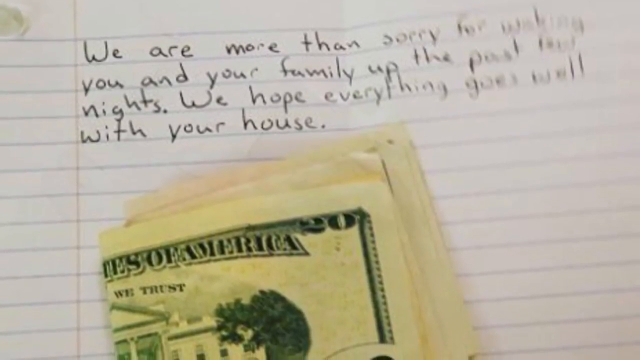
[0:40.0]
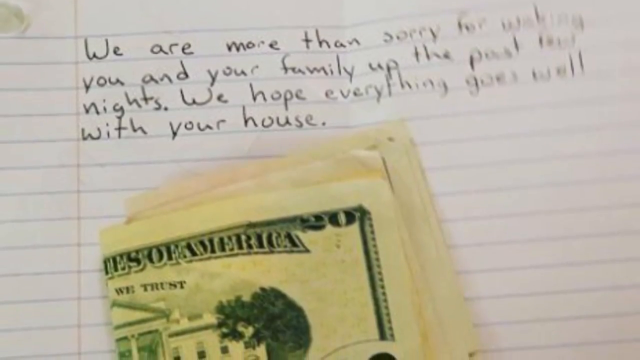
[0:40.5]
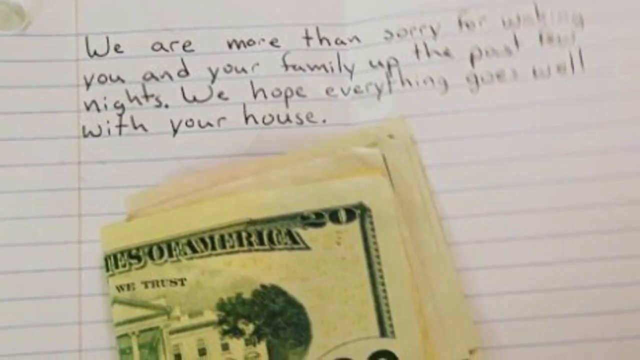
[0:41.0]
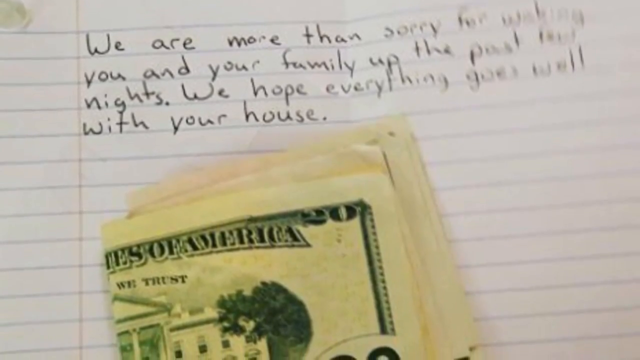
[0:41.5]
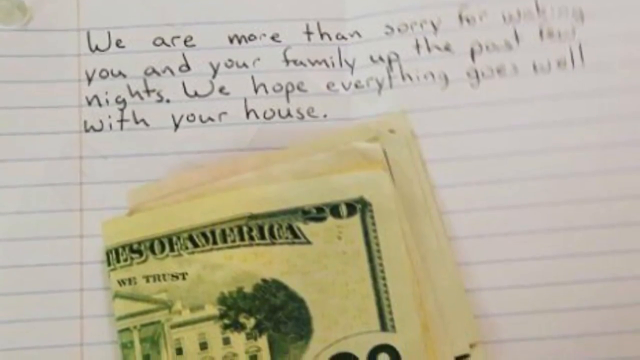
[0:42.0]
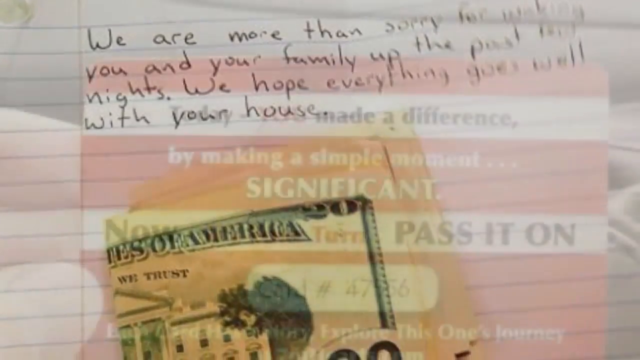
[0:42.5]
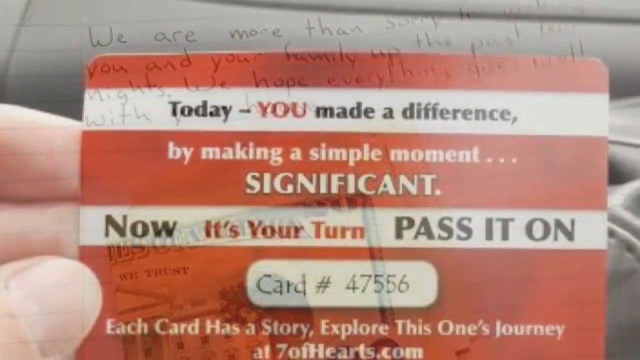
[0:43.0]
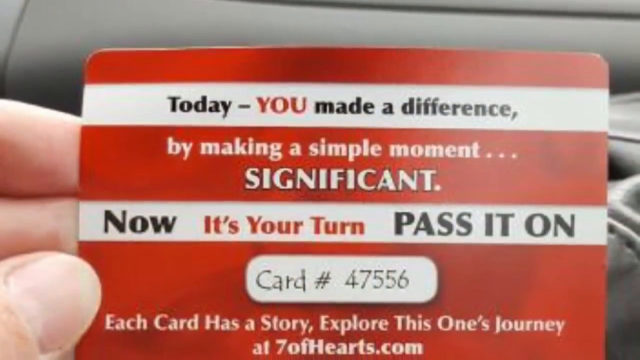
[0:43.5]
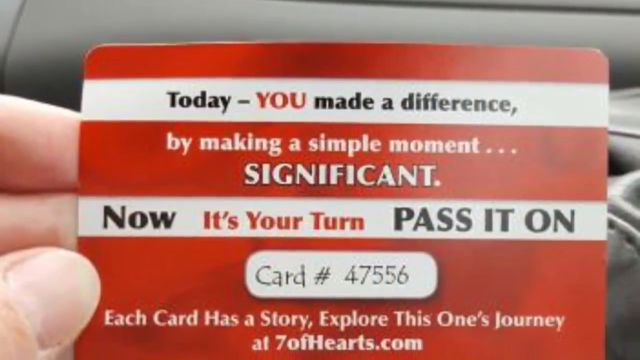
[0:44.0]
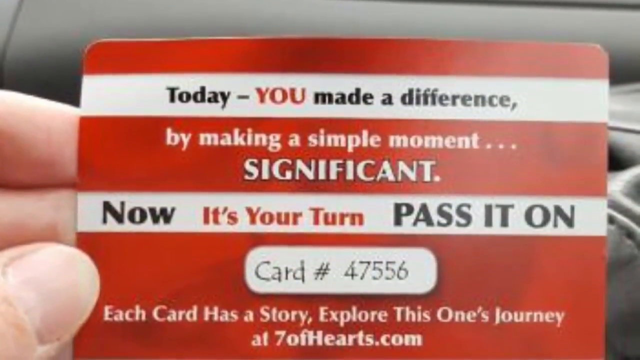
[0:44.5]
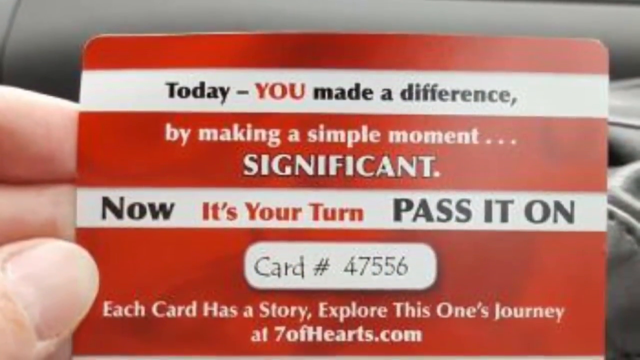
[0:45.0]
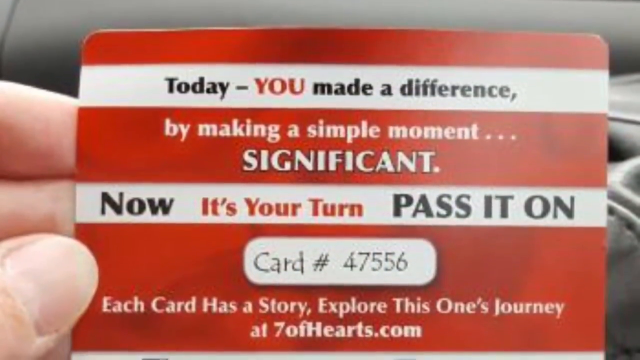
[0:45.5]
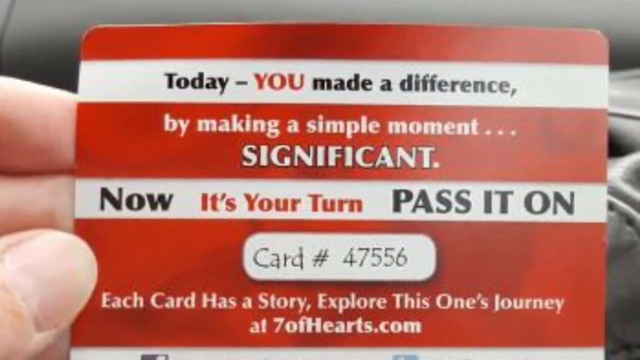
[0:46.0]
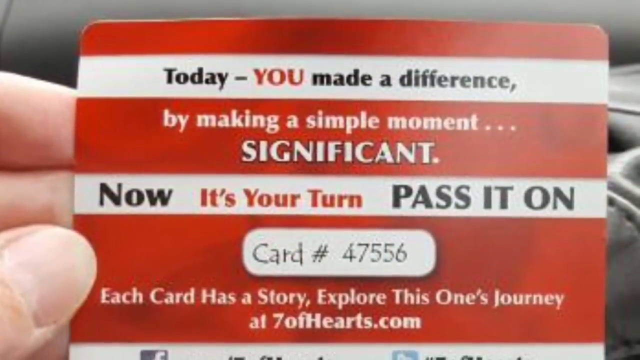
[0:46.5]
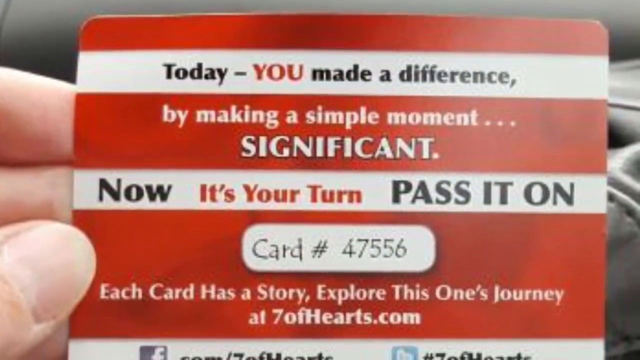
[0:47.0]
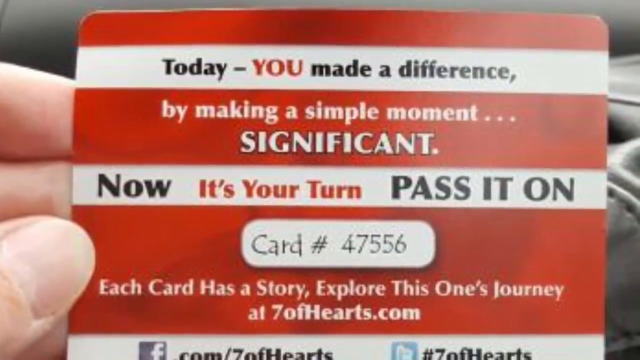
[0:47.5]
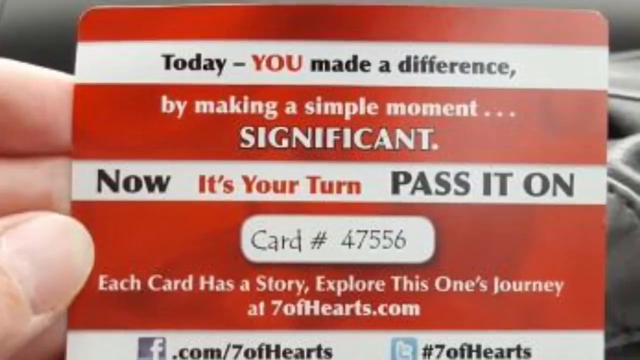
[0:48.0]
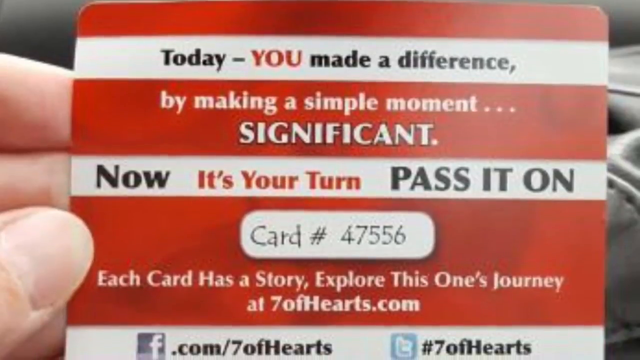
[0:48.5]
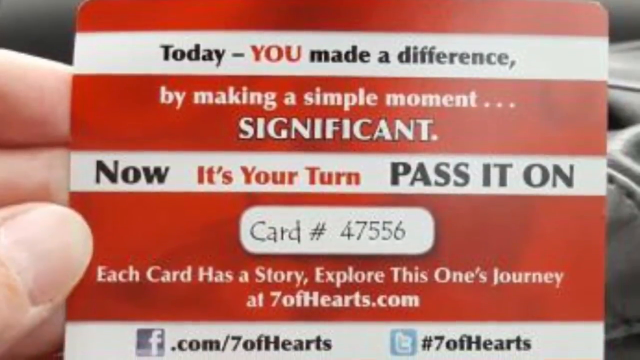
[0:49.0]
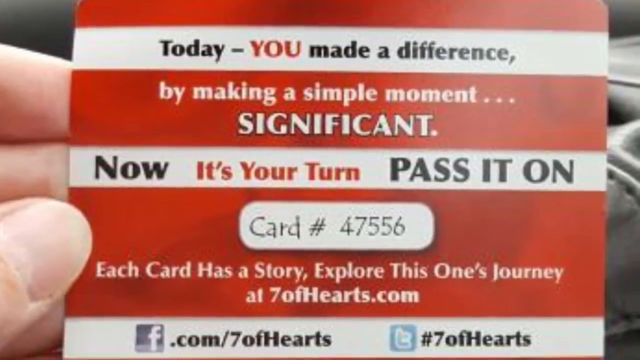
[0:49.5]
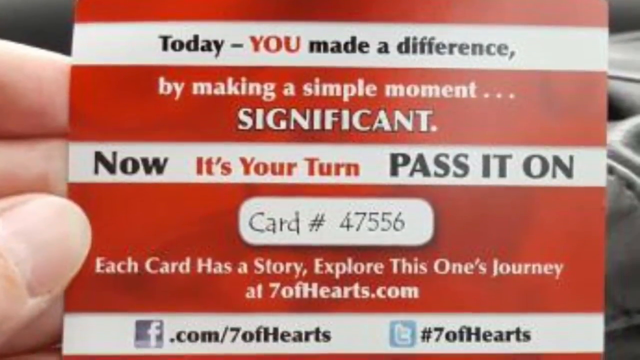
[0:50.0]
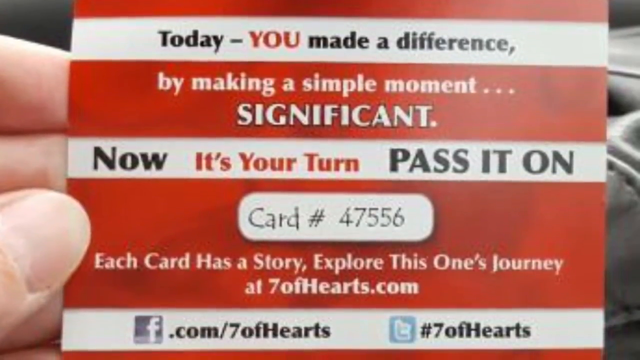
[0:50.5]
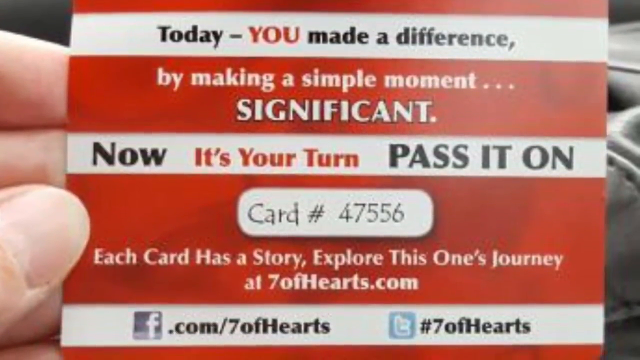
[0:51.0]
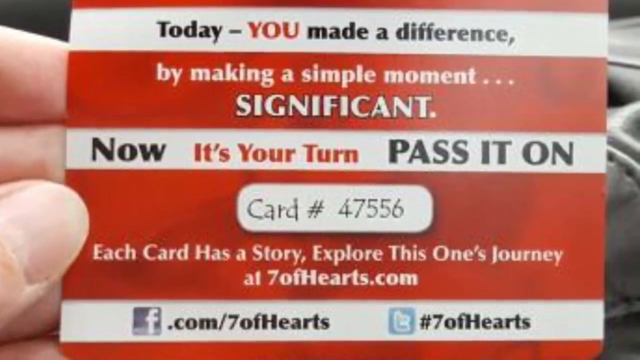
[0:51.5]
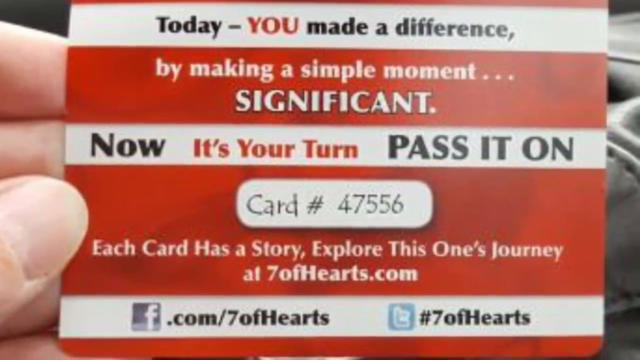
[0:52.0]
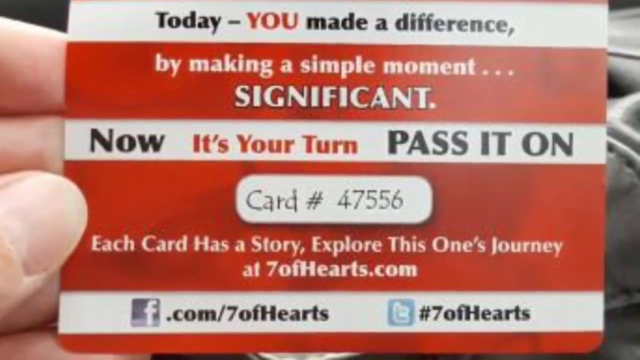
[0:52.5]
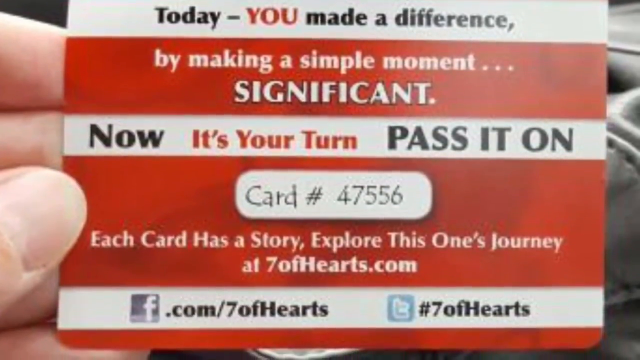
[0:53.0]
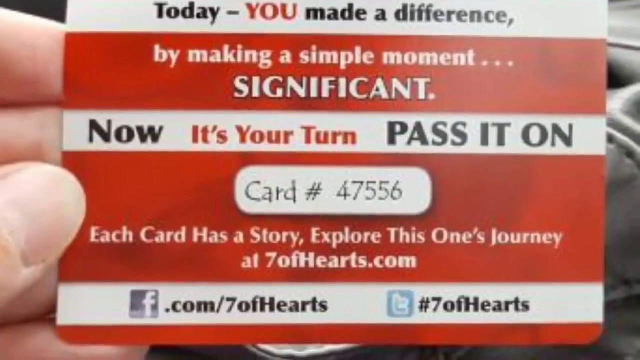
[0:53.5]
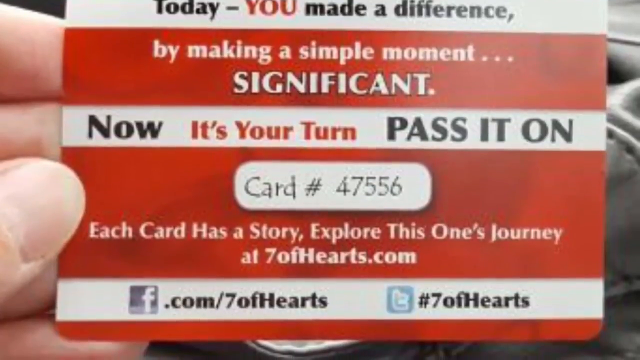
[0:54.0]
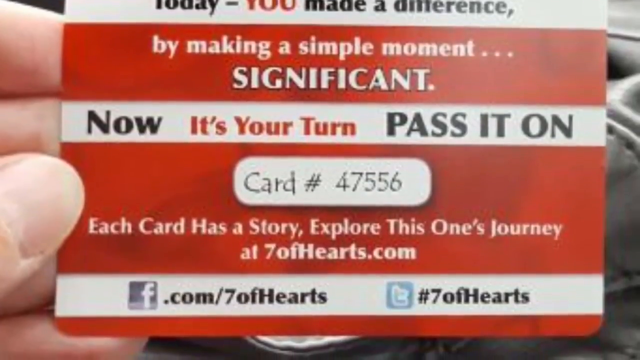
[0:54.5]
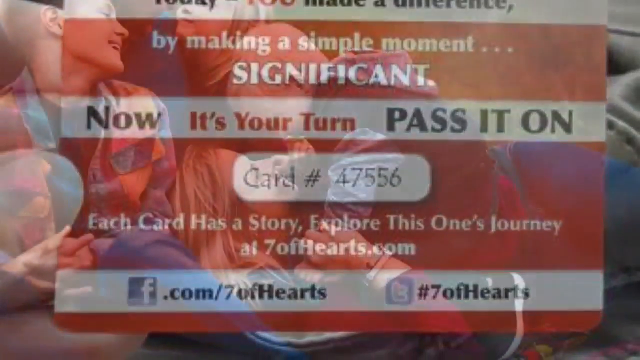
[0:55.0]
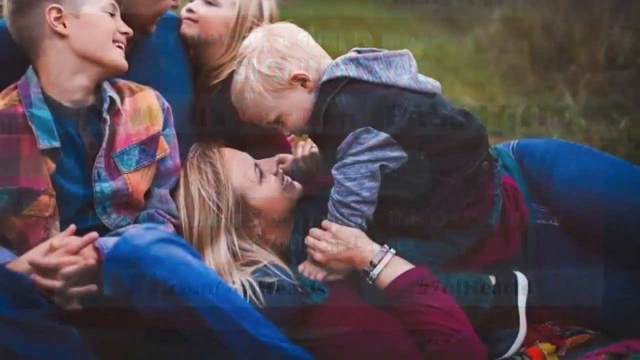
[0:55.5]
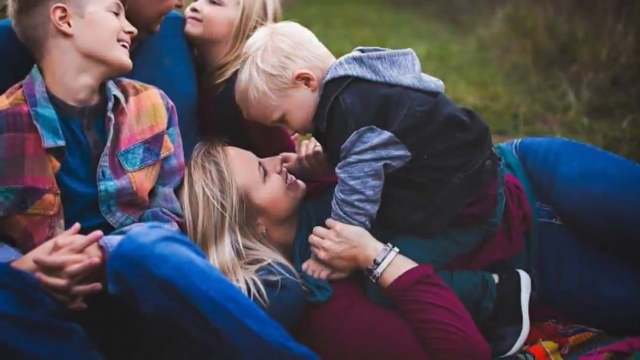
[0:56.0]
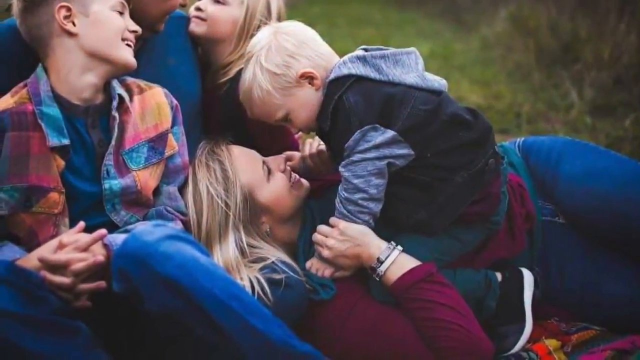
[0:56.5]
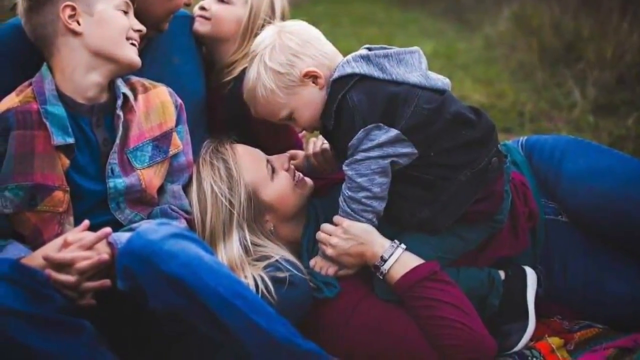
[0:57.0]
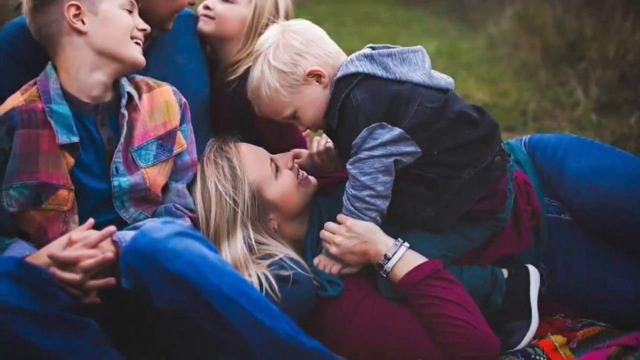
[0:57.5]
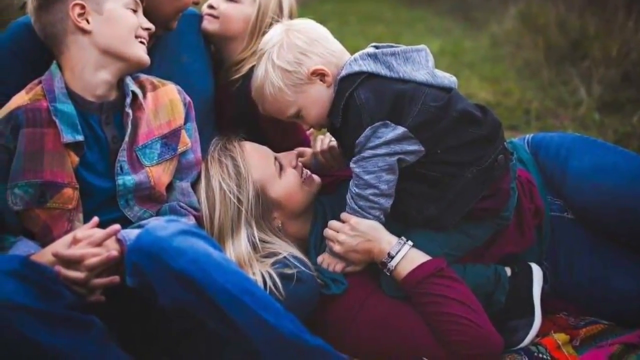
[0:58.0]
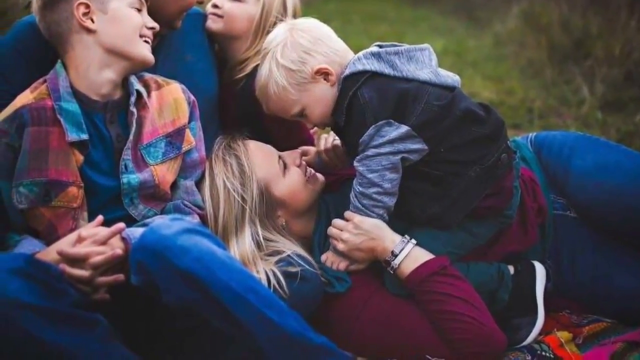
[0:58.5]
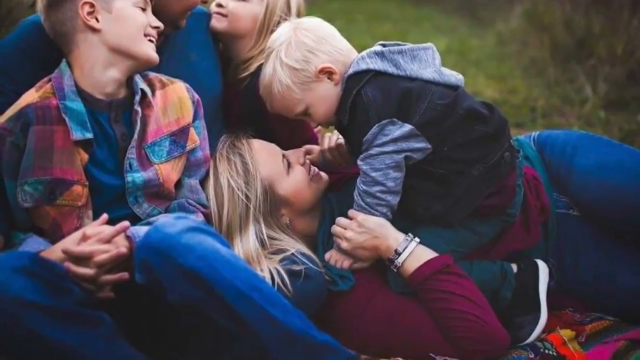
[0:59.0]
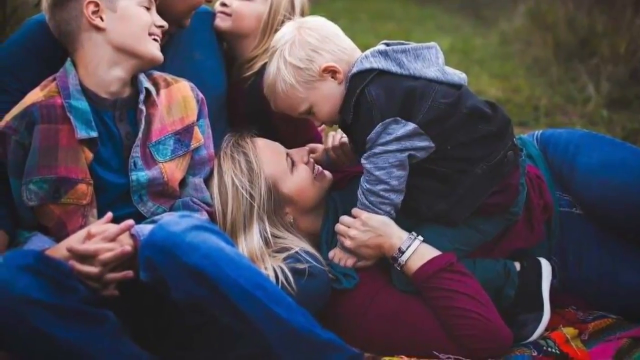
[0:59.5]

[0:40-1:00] The note continues with "and your family up the past few nights. We hope everything goes well with your house," with a stack of money below: a folded 20 with what looks like a few bills underneath. The note is handwritten on composition-style paper. The screen scrolls down to a card that someone is holding. The card shows the number 47556, the text "Each card has a story," and "sevenhearts.com," "facebook.com, sevenhearts" and "twitter.com, #sevenhearts." It looks like some kind of business card promoting people to do good, help somebody out, share the story, and pass the card on.